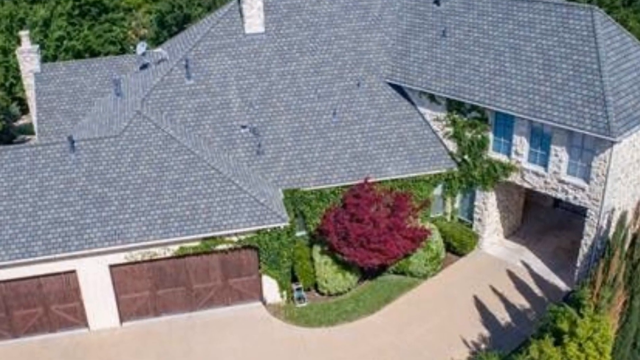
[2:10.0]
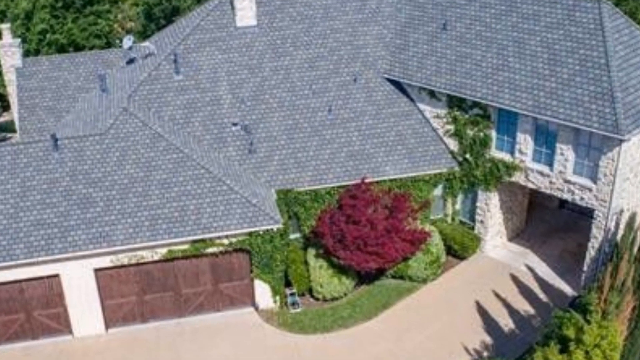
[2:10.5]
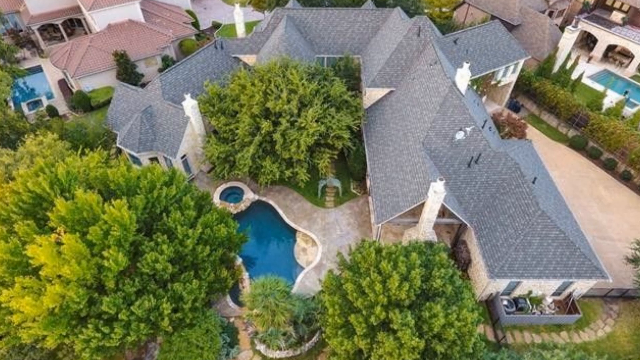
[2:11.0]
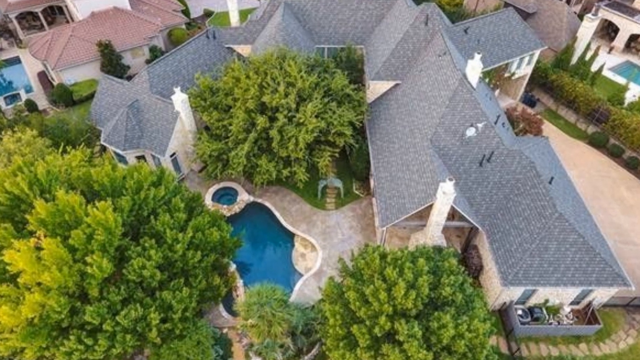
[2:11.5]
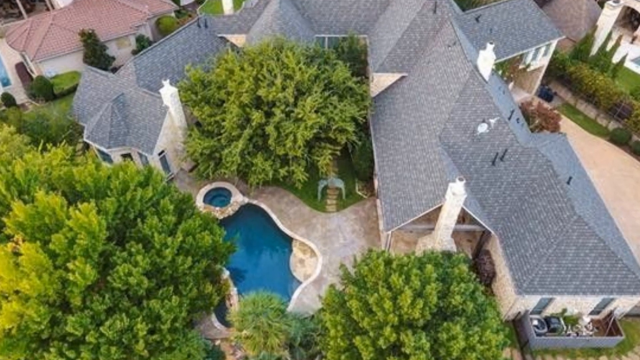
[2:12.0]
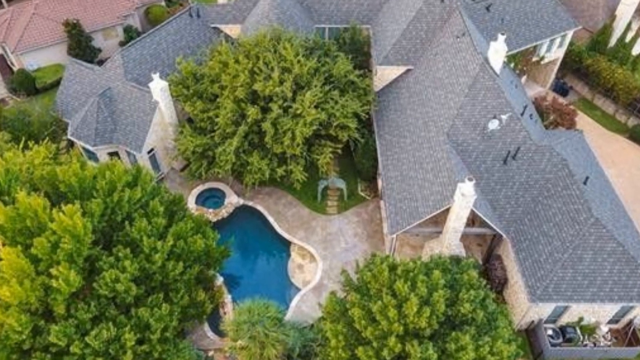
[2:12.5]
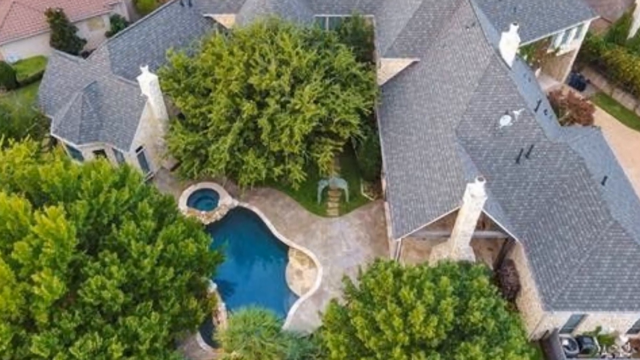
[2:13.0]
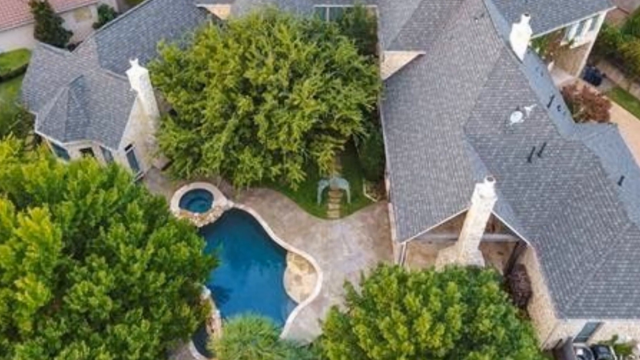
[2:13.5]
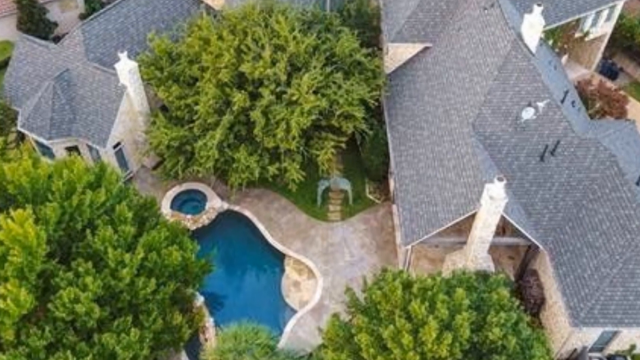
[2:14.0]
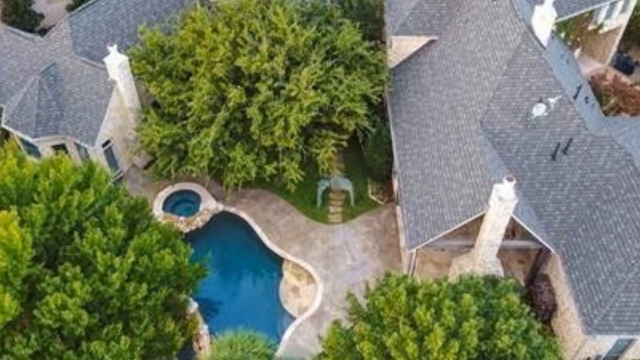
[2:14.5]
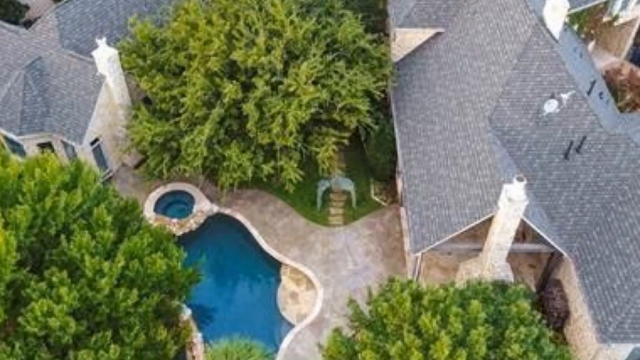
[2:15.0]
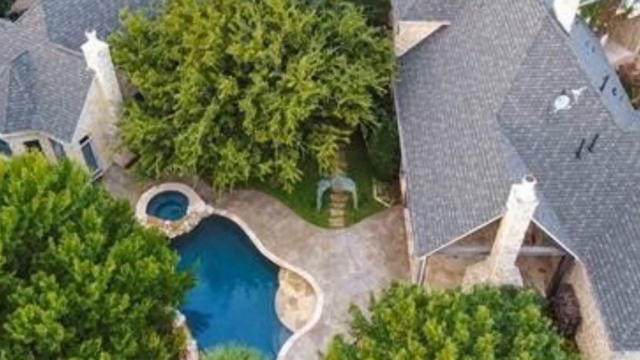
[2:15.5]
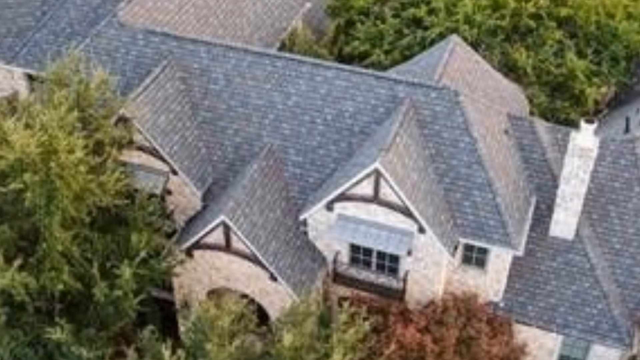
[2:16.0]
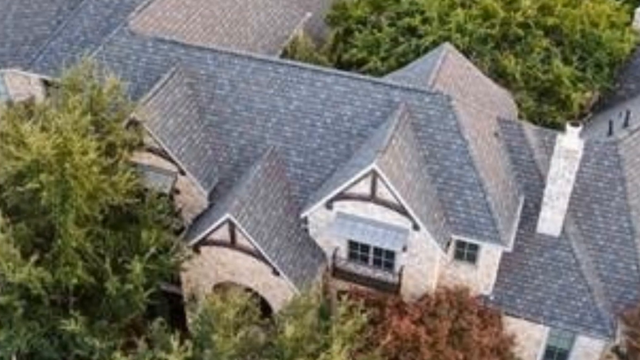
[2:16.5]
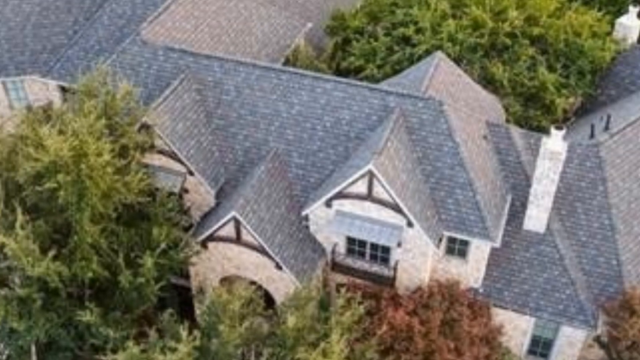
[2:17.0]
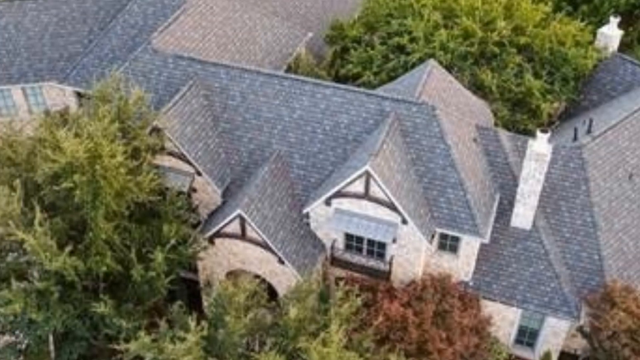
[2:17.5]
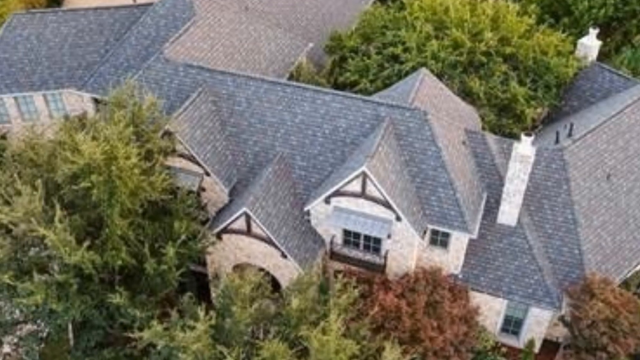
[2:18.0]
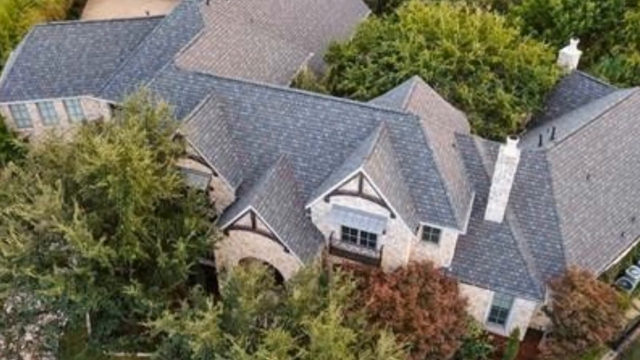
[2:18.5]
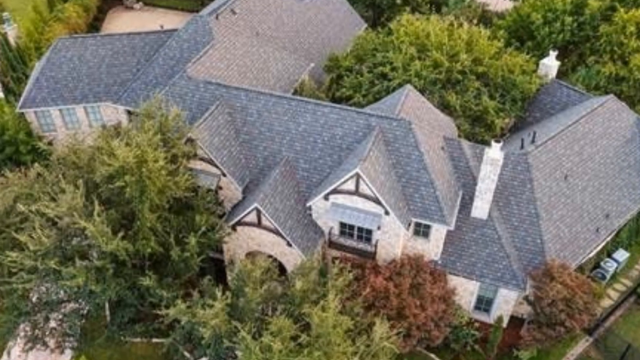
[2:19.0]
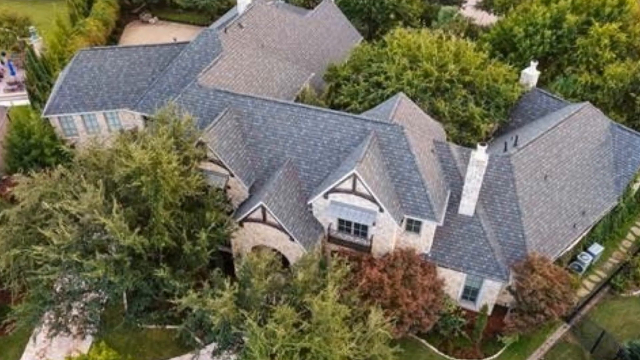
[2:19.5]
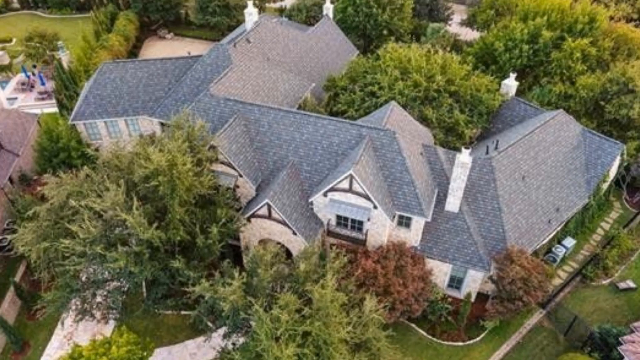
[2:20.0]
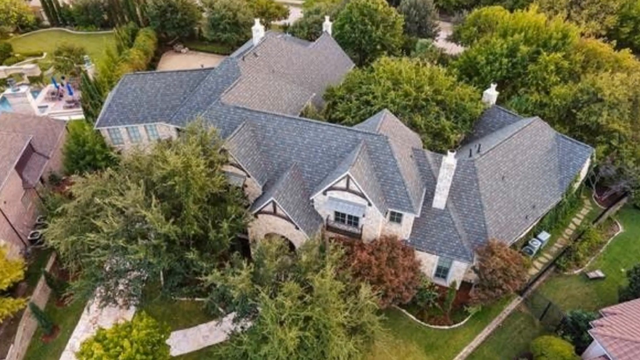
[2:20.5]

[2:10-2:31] More aerial shots of the house are shown, revealing the garden area and the back garden with the pool and the hot tub or jacuzzi. Much of the roofing is visible: a greyish stony roof, with beige sandstone on the rest of the building's exterior. The structure looks modern but also traditional. A lot of green is visible in these final shots. Little of the front of the house, such as the driveway, is shown. The video then cuts to a black screen.